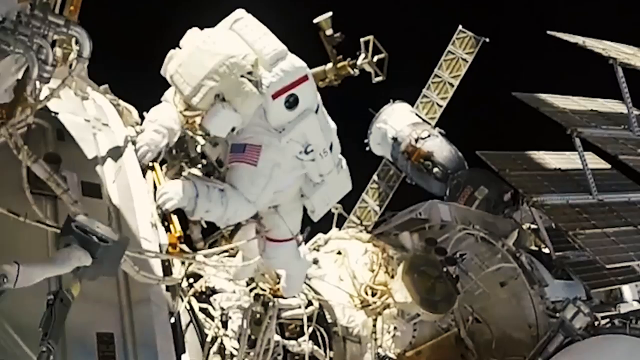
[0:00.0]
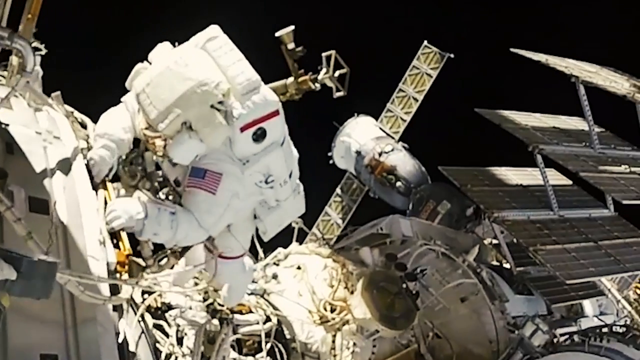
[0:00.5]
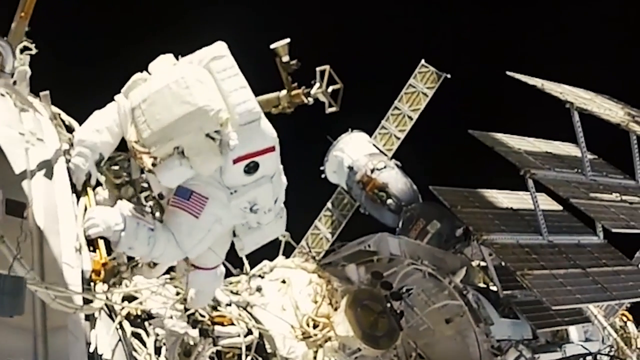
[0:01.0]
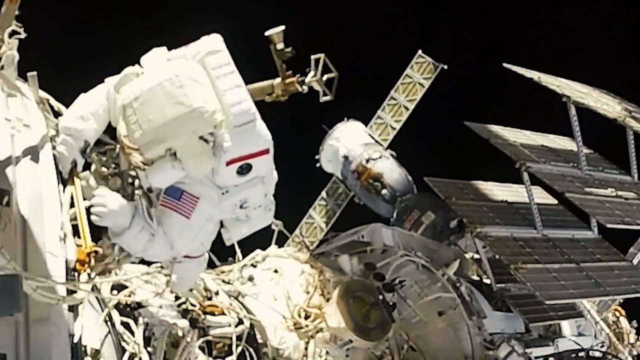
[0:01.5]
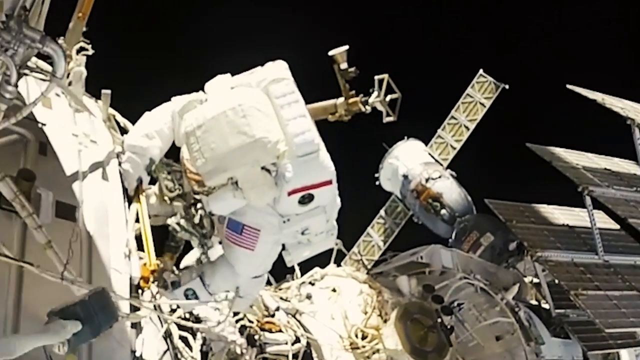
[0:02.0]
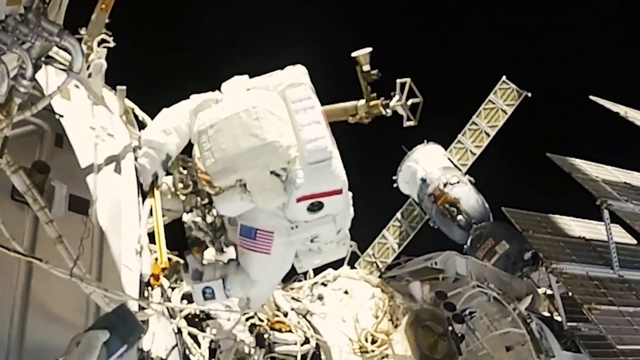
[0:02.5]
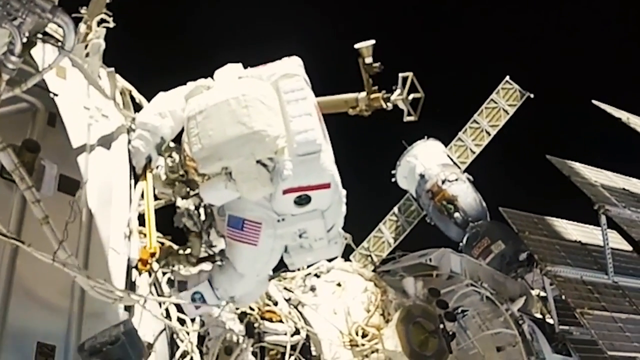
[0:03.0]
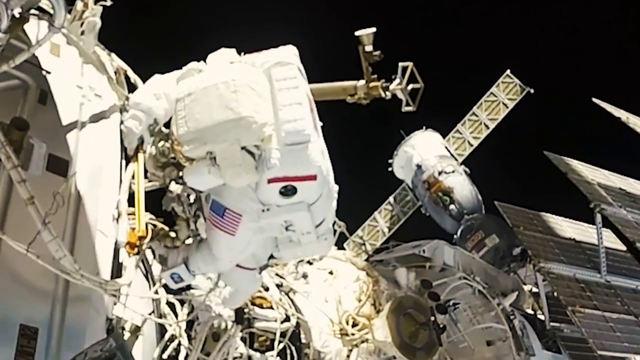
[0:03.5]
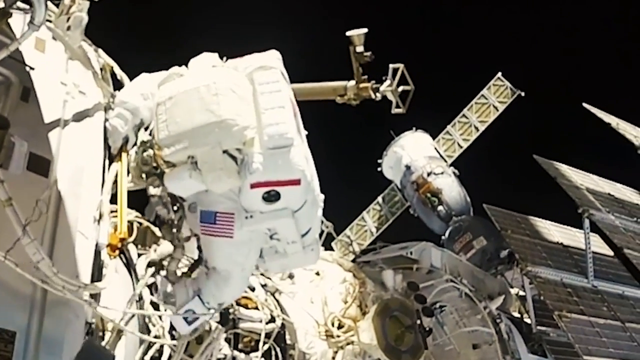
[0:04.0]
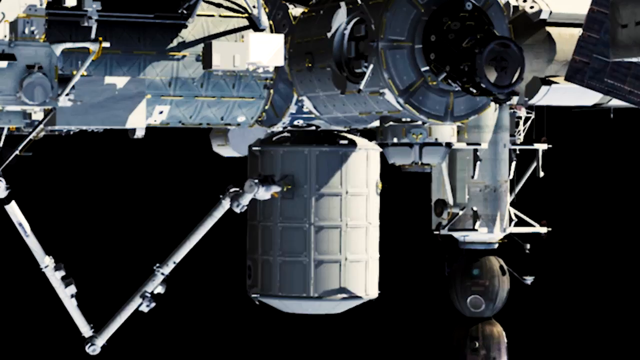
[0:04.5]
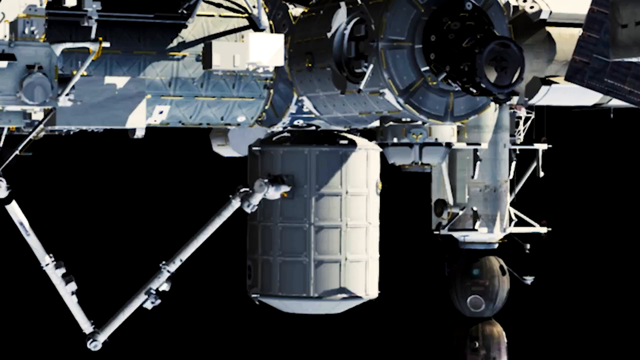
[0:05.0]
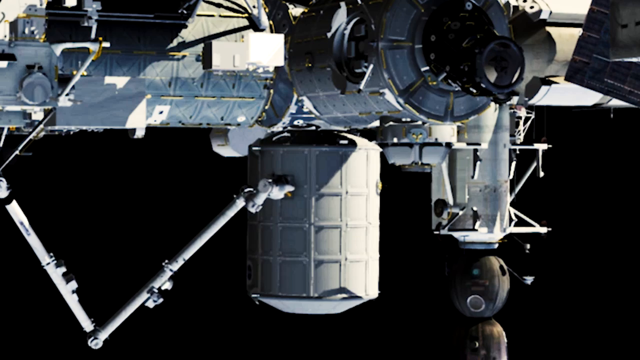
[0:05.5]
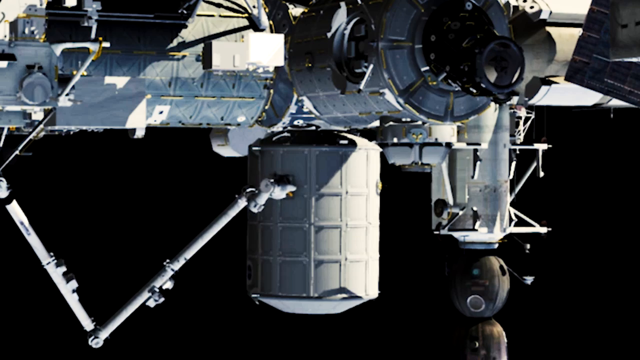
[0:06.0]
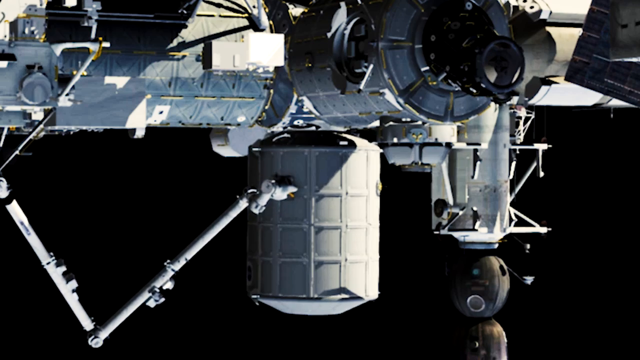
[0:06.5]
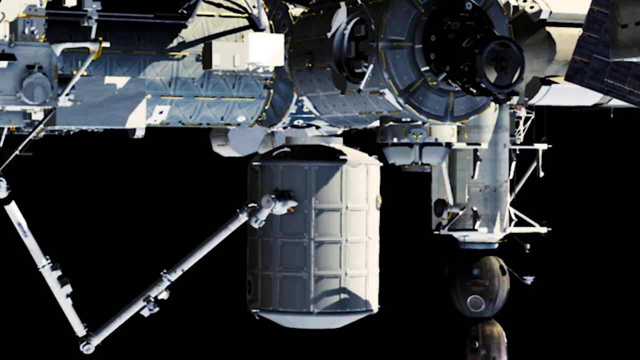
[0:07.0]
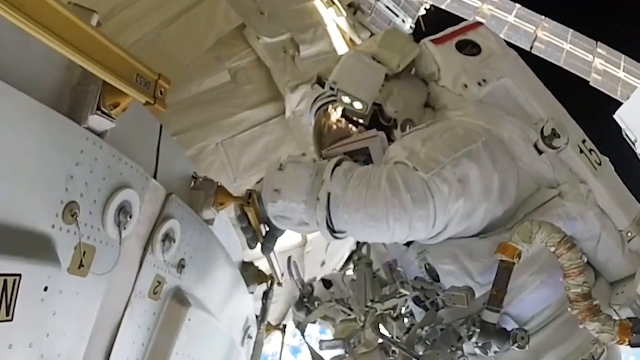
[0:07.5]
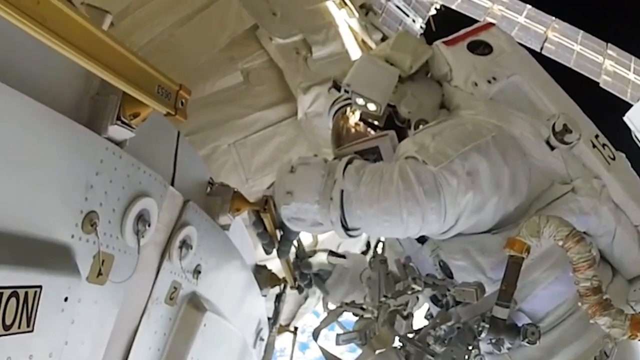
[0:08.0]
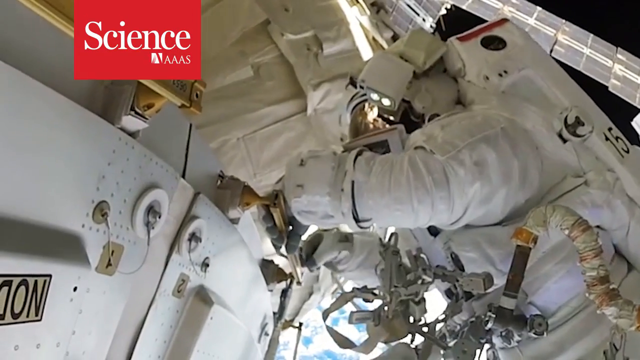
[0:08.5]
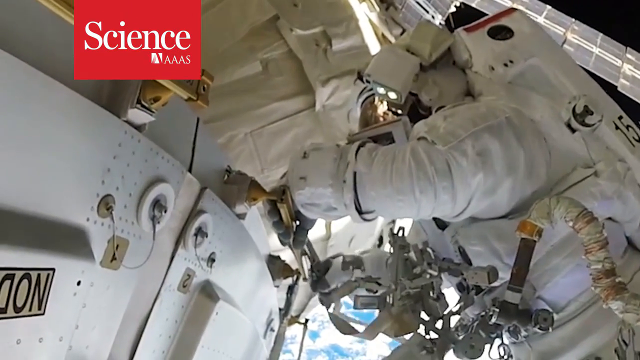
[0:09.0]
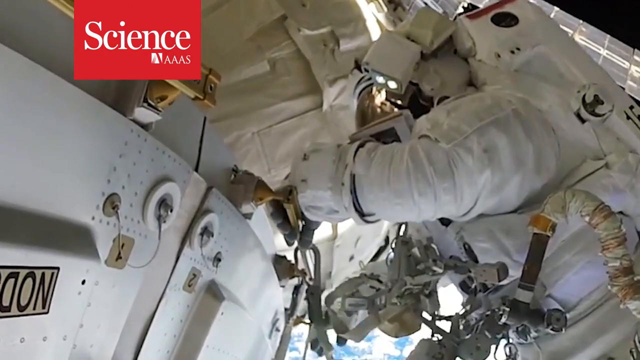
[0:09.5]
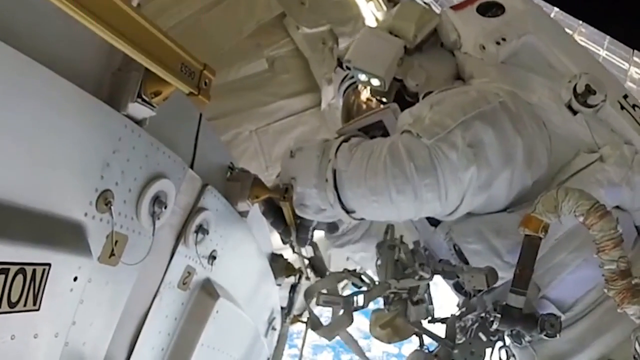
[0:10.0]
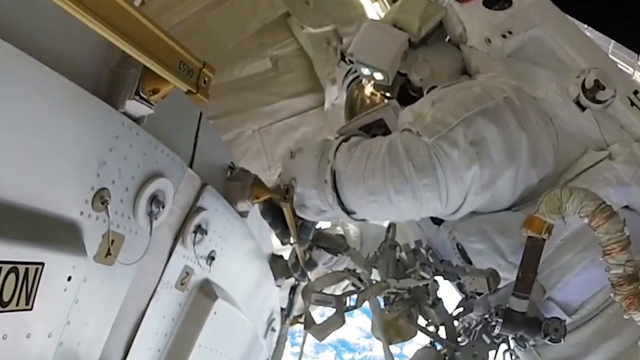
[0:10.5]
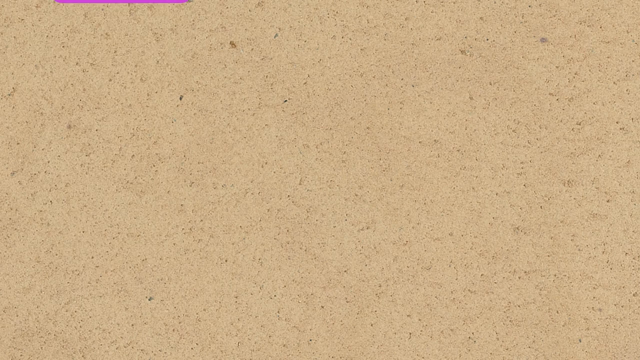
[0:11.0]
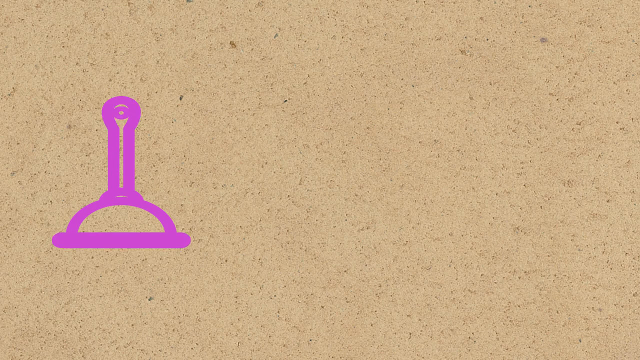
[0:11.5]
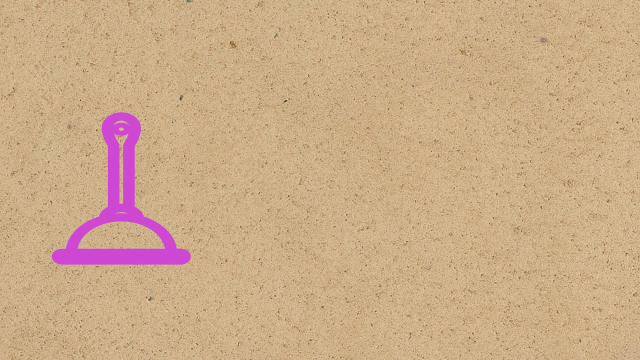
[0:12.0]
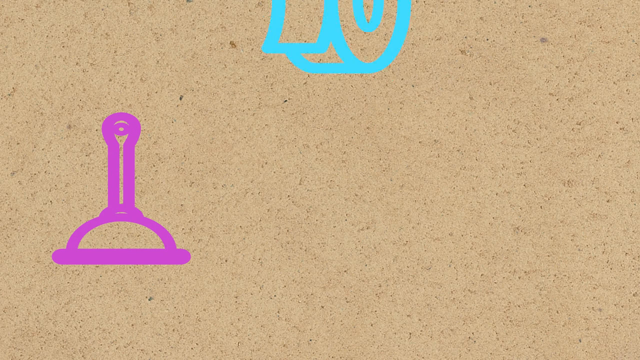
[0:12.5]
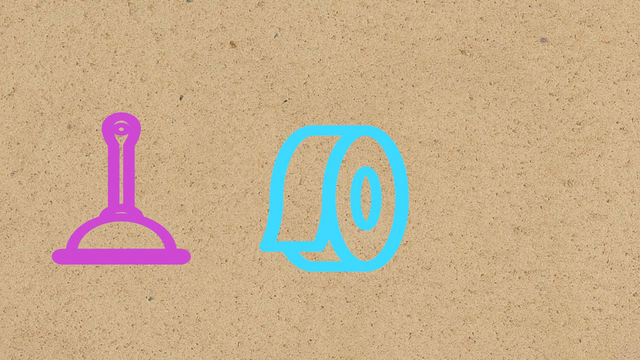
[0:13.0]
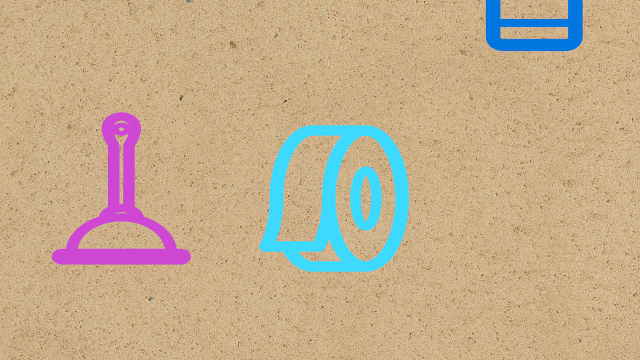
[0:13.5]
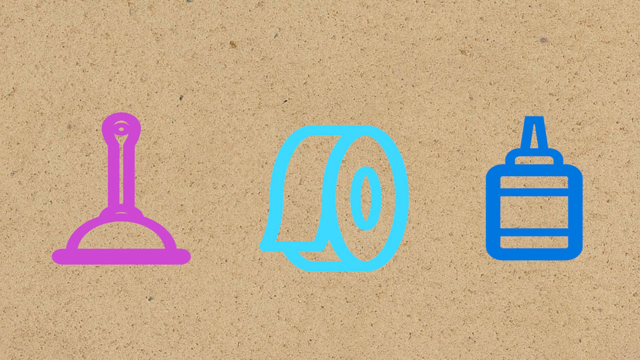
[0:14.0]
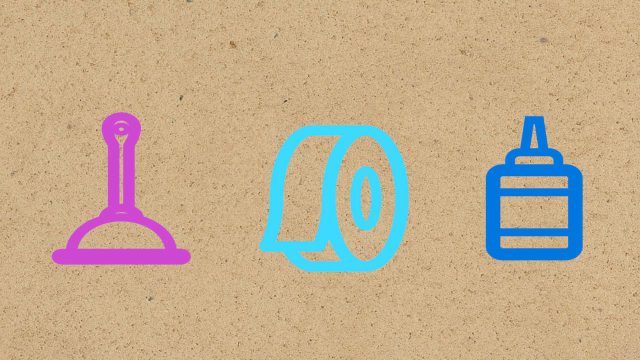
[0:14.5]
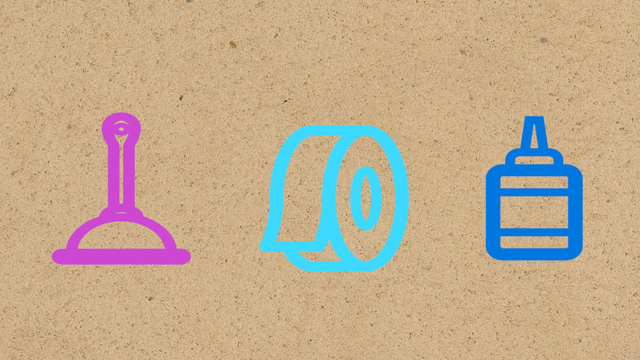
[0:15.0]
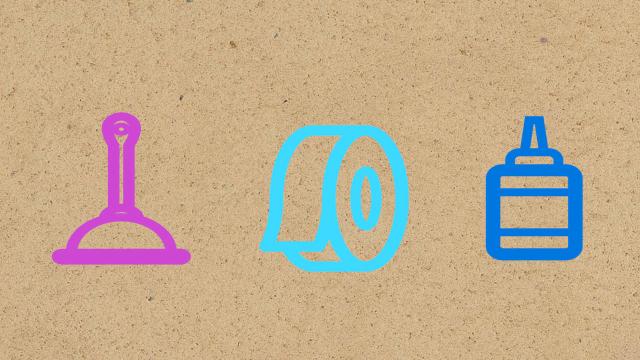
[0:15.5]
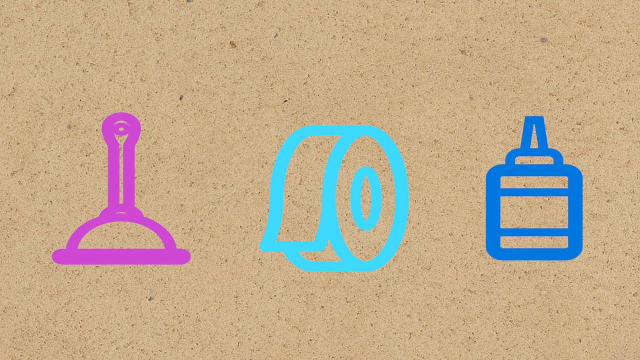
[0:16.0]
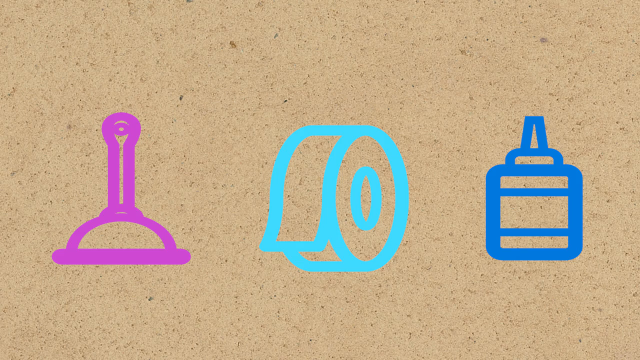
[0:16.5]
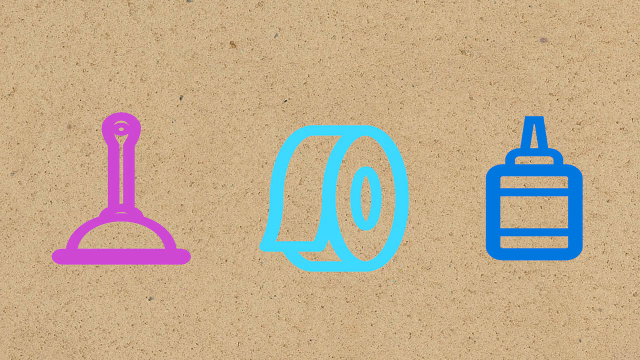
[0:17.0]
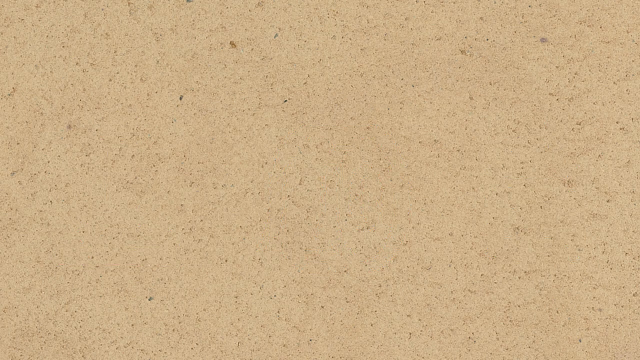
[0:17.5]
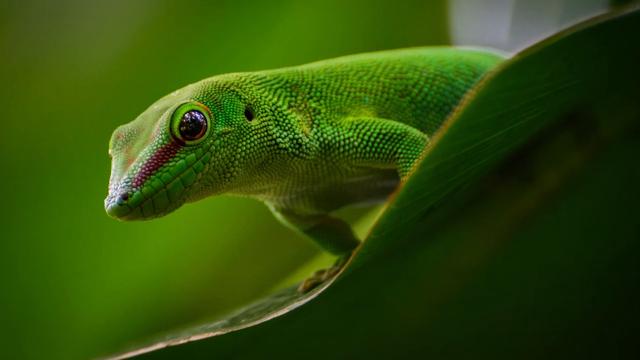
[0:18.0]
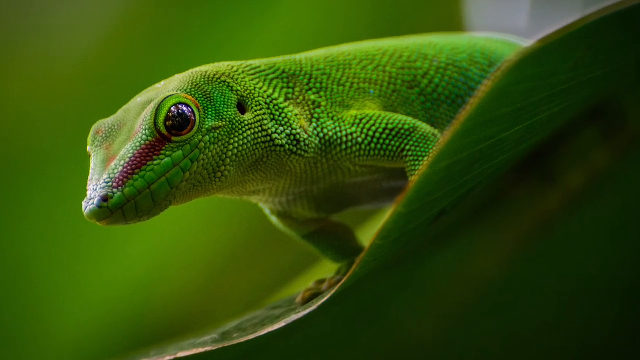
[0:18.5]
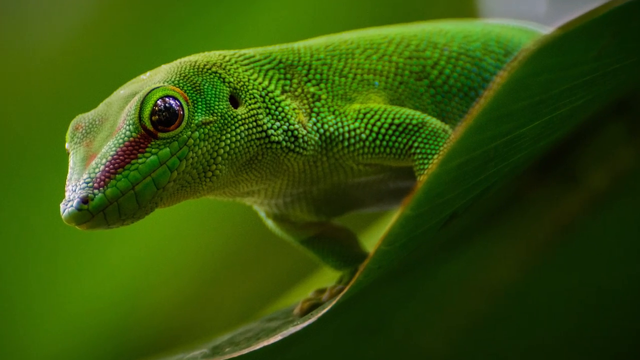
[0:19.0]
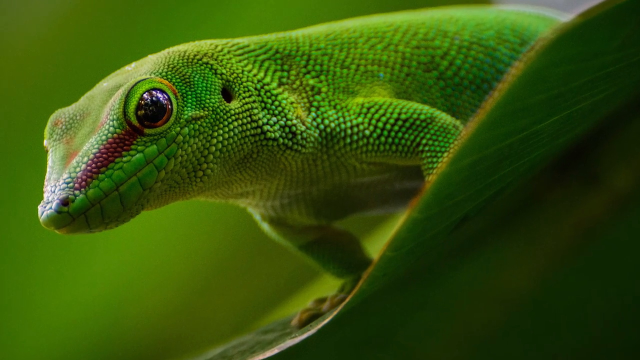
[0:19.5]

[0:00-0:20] An astronaut in a white astronaut uniform with an American flag on its left shoulder crawls on a big white machine. The background is solid black, so the setting is probably the space station. The machine has a whole bunch of wires and cables running along its side. The video cuts to another view of a gray machine, where a mechanical arm attaches to a cylinder on the machine, takes it off and pulls it down. Next comes an up-close view of an astronaut putting a strap around a part of the space station. Then the video cuts to a picture of a green lizard, possibly a gecko, standing on a leaf, with a red stripe on the side of its nose, and the camera zooms in very close.